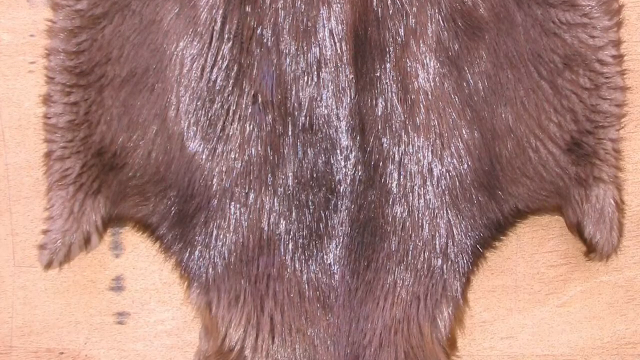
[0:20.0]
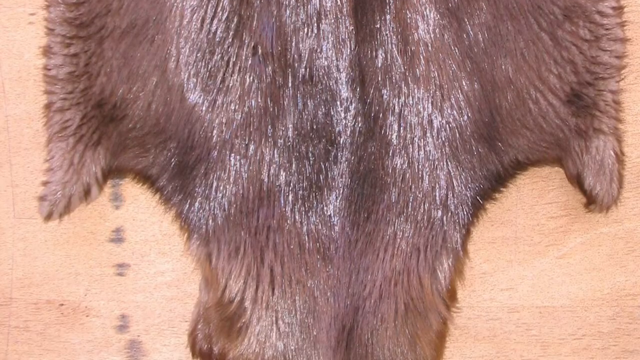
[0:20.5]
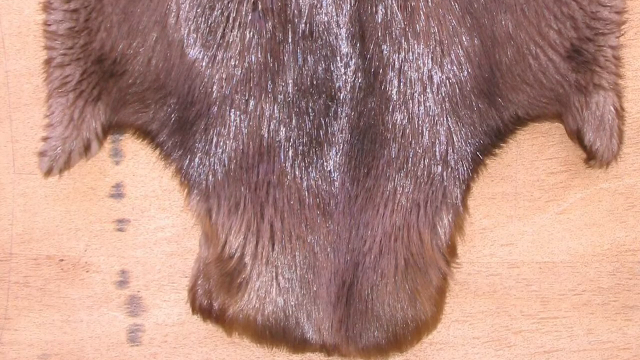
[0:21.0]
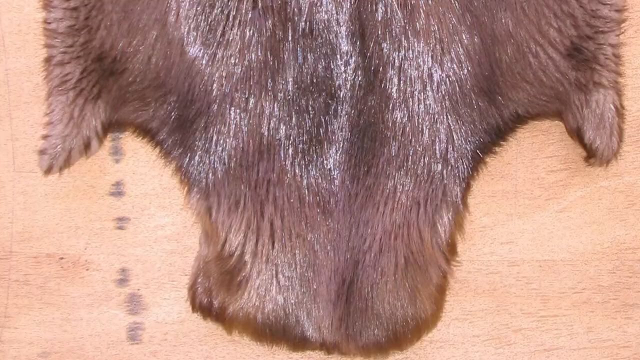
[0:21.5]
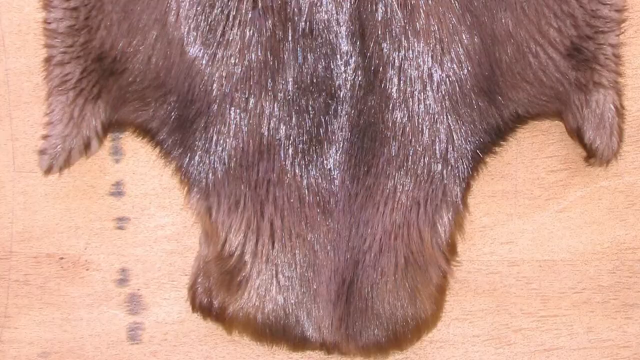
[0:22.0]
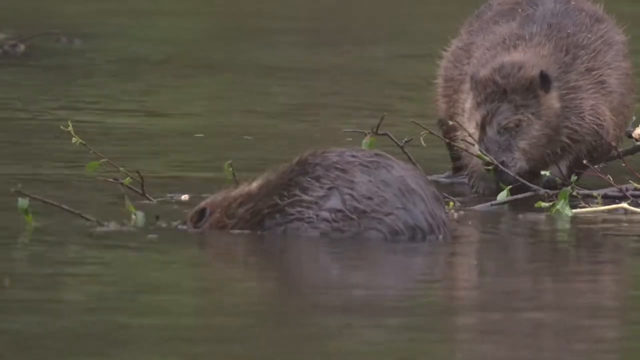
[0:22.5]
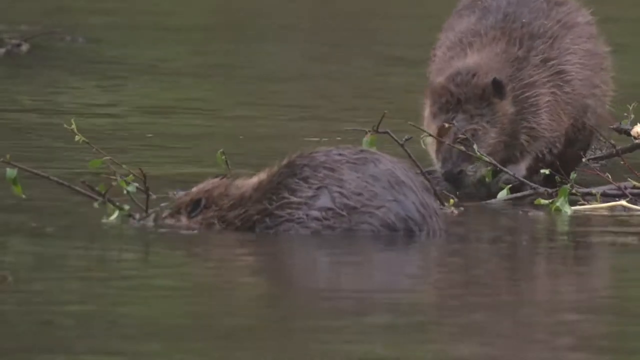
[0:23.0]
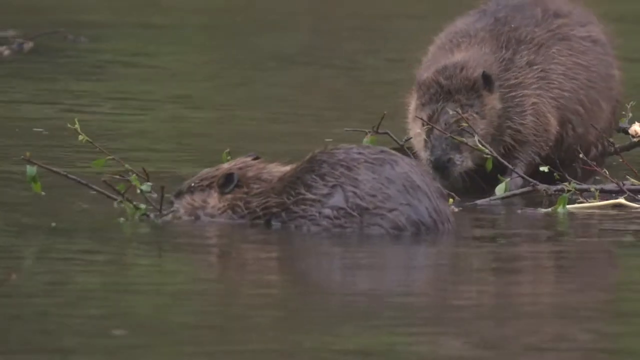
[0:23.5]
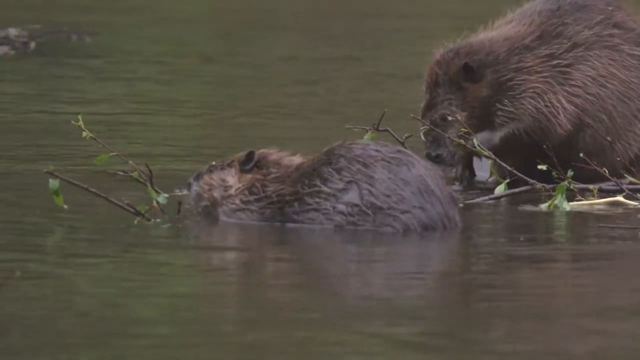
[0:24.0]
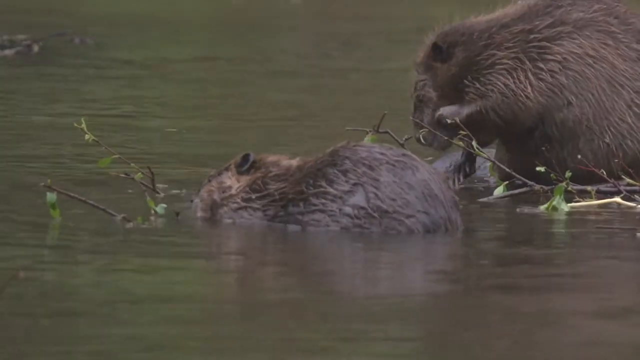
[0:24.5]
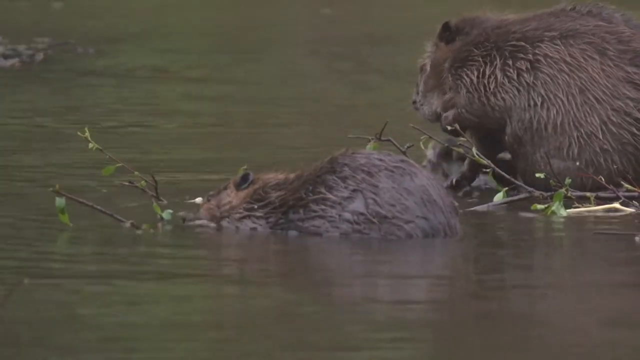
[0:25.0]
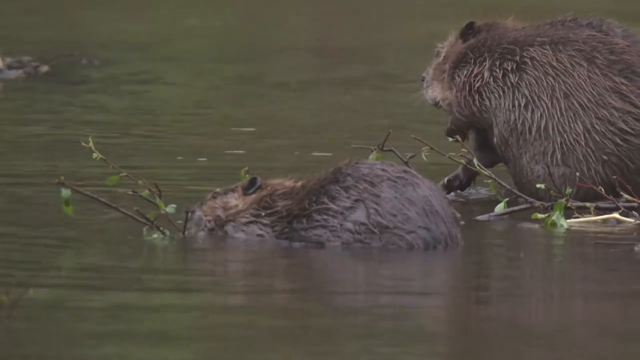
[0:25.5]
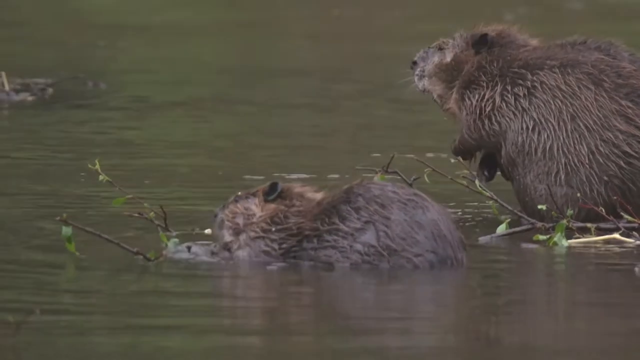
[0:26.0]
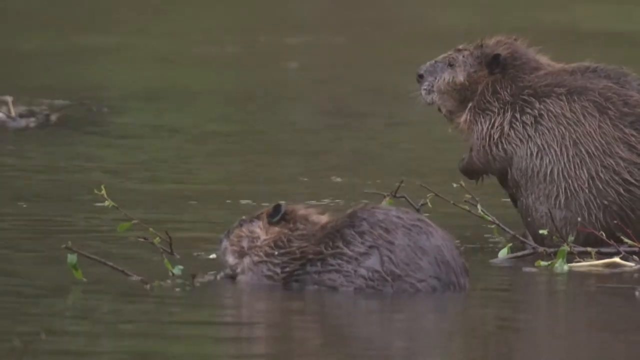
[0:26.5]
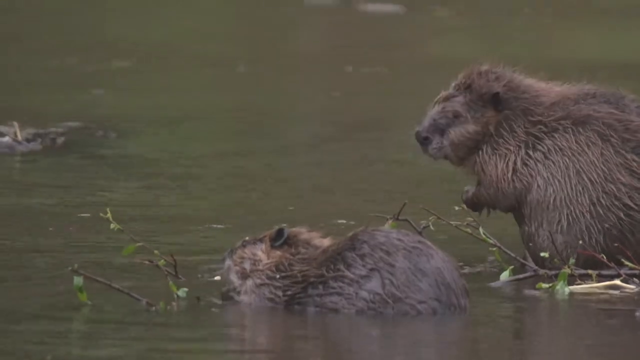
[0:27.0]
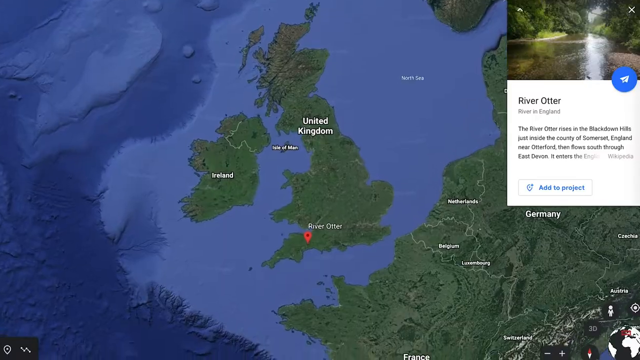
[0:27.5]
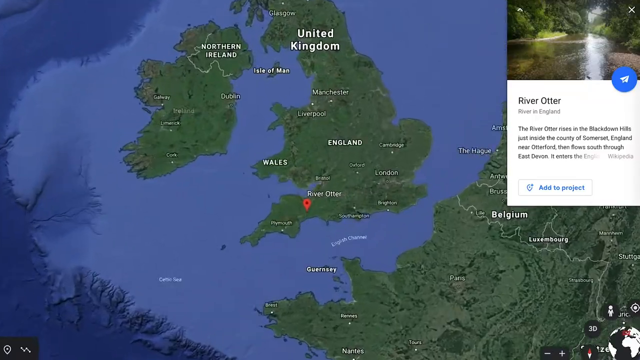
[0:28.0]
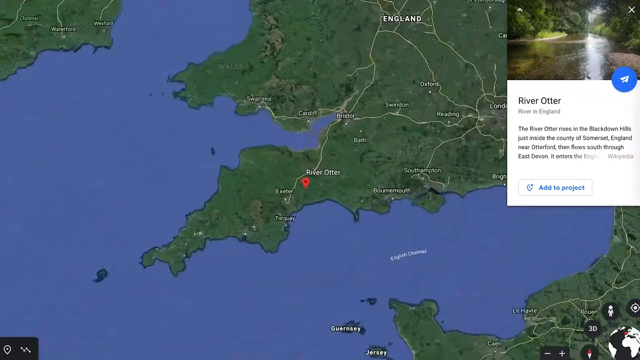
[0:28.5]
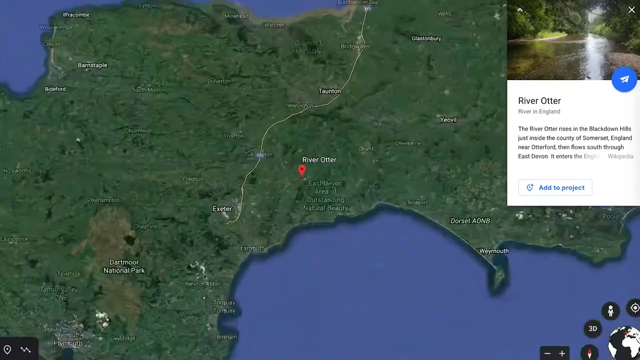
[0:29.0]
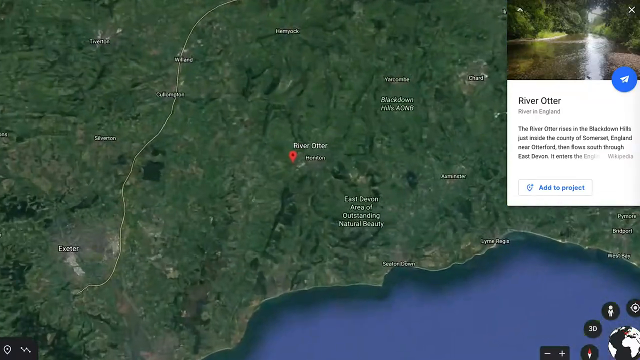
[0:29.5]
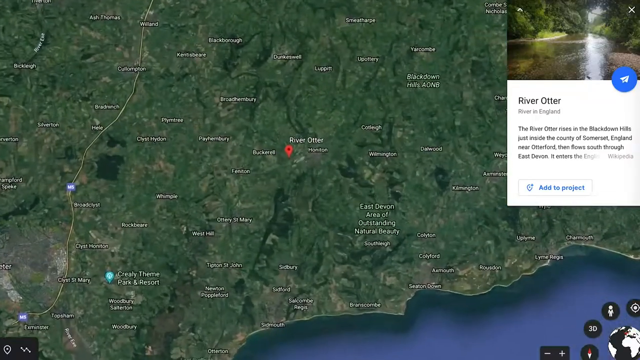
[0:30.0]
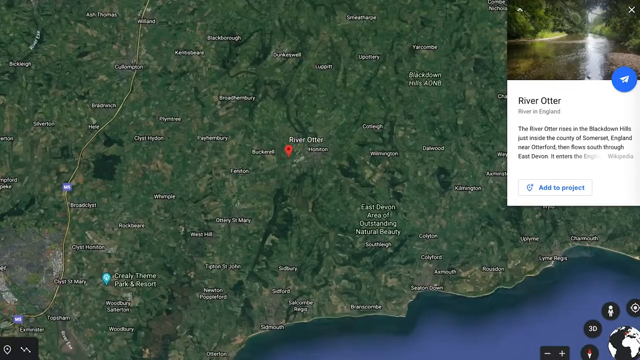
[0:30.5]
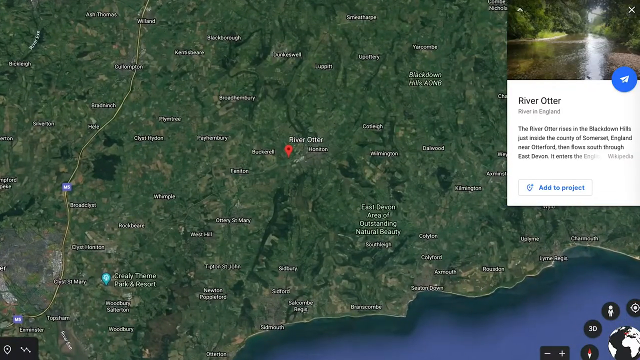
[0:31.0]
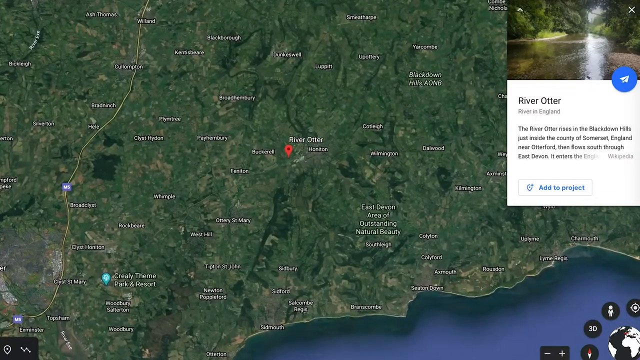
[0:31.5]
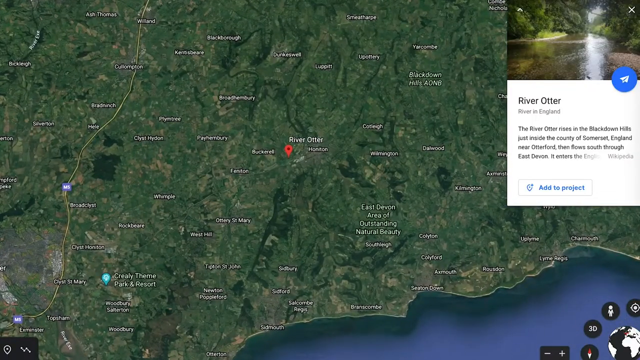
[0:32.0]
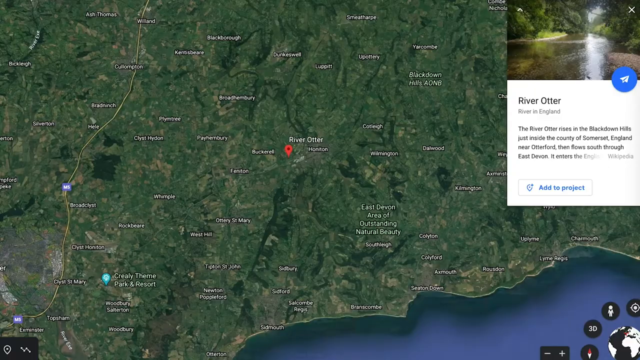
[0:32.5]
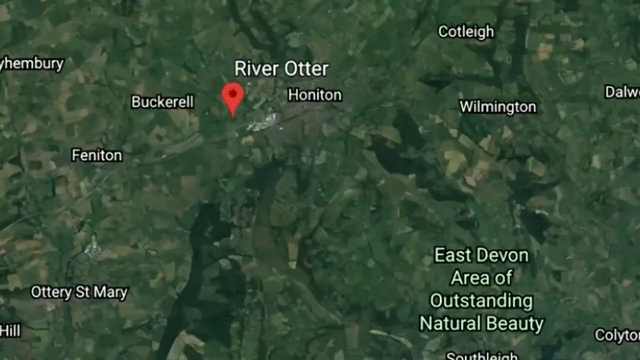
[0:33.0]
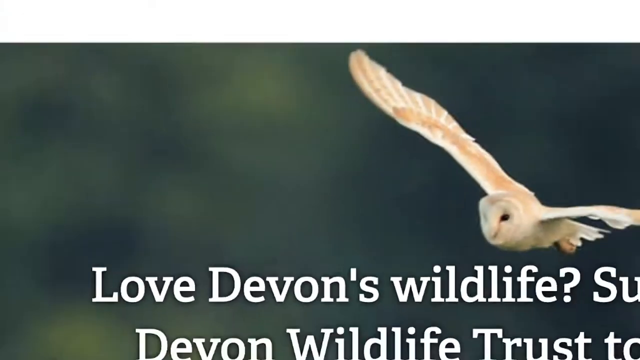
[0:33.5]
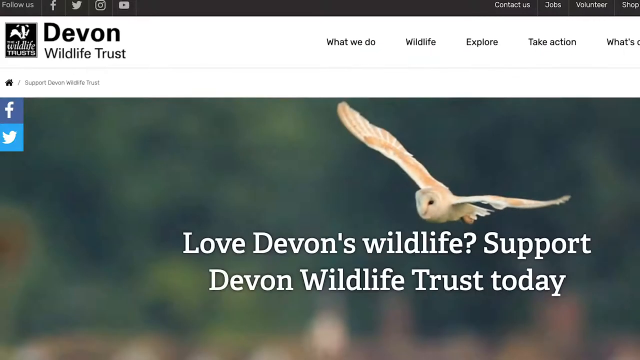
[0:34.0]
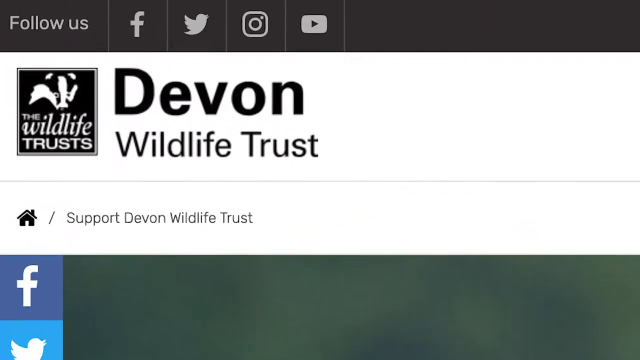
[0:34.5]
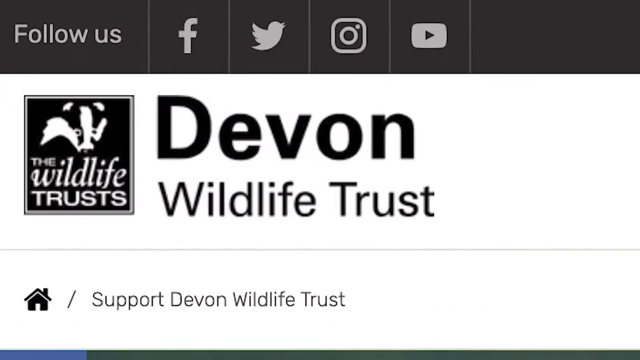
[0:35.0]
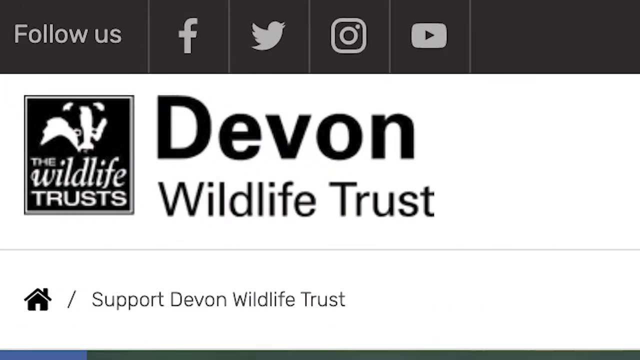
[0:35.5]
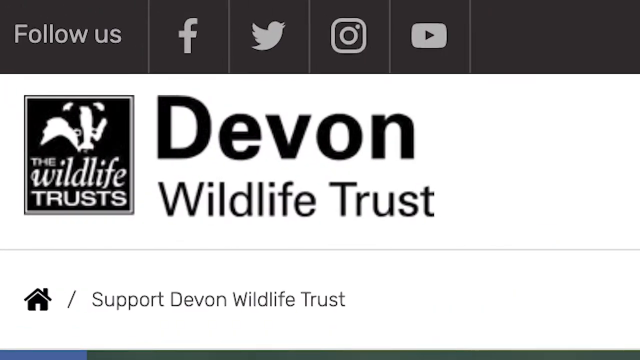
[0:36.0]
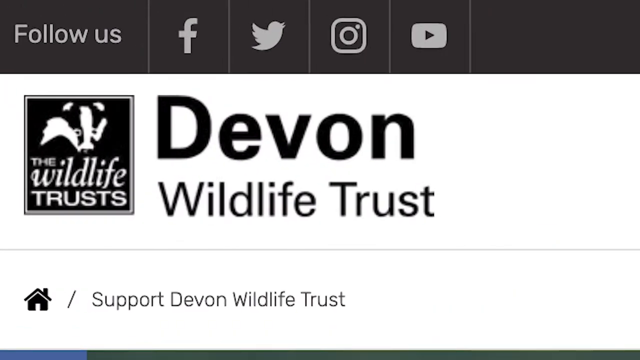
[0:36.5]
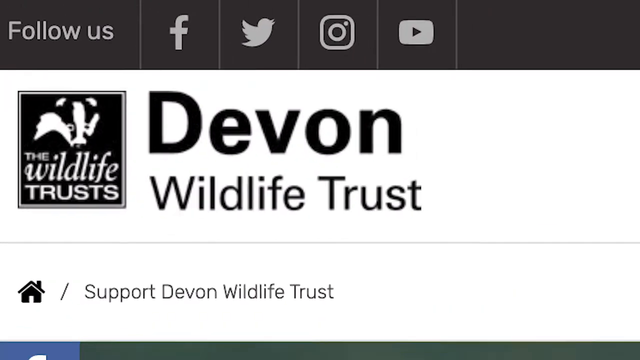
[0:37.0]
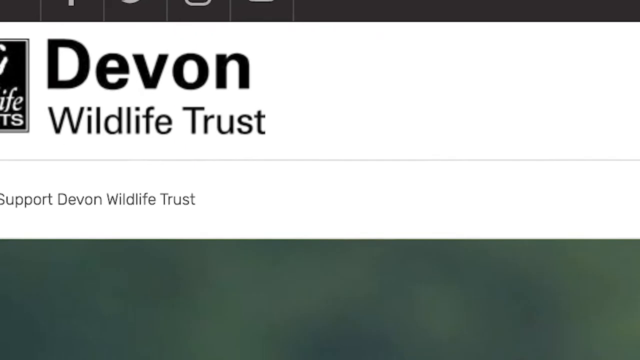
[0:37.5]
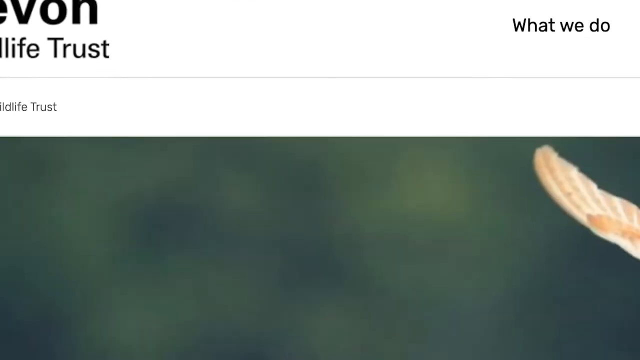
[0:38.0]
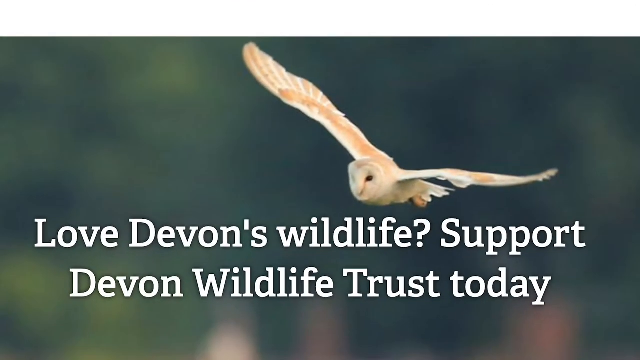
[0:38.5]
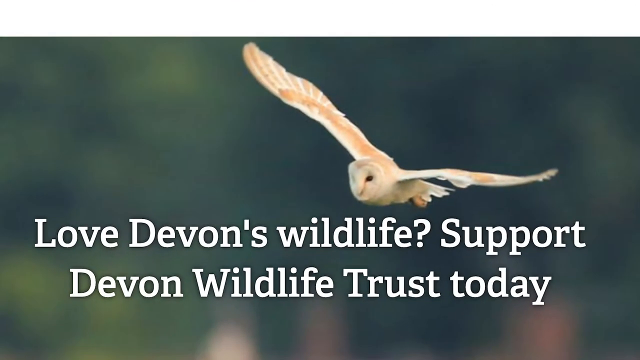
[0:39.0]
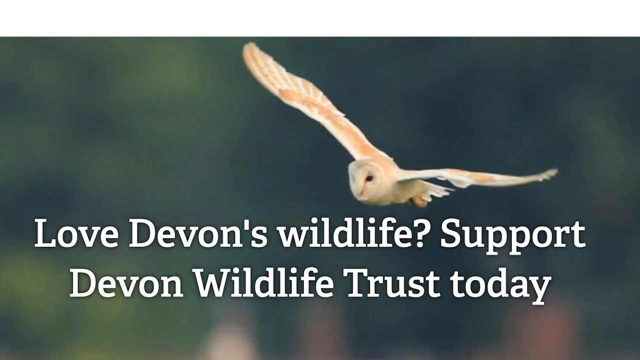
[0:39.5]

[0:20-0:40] The camera zooms down on a beaver pelt. The video transitions to two very large live beavers building a dam of sticks, leaves, and twigs, with a river. Next comes an aerial view of a map of the United Kingdom, scrolling down to the southwestern corner, England, showing the River Otter in England. In the upper right-hand corner is an image of the river, which appears shallow, with trees on both banks. Text reads "Rises in the Blackdown Hills just inside the county of Somerset, England near Otterford, then flows south through". The video zooms in and transitions to a screenshot with an image of a white and orange flying owl and the words "Love Devon's Wildlife, Support Devon's Wildlife Trust today". The view pans to the upper left-hand corner, where there is Devon's Wildlife Trust, a logo that says "the Wildlife Trust", "follow us" on Facebook, Twitter, Instagram and YouTube, and an option to support Devon's Wildlife Trust. The video zooms back out, showing the image of the soaring bird.